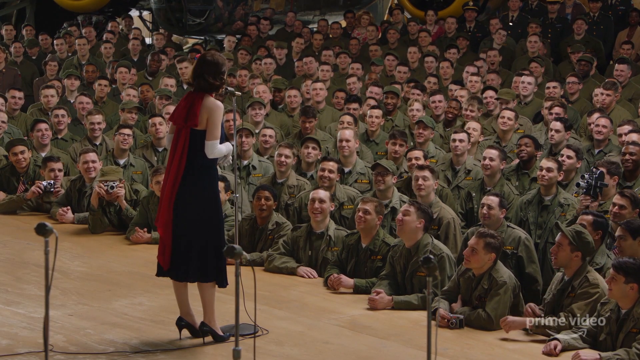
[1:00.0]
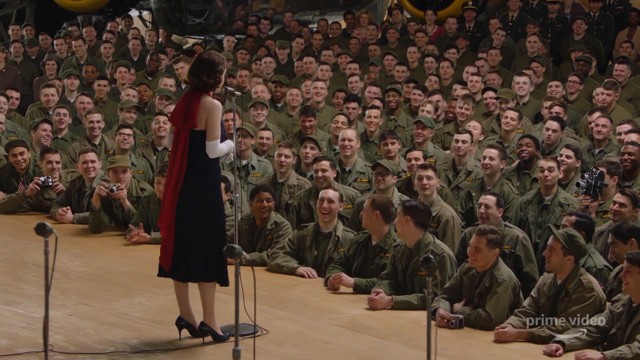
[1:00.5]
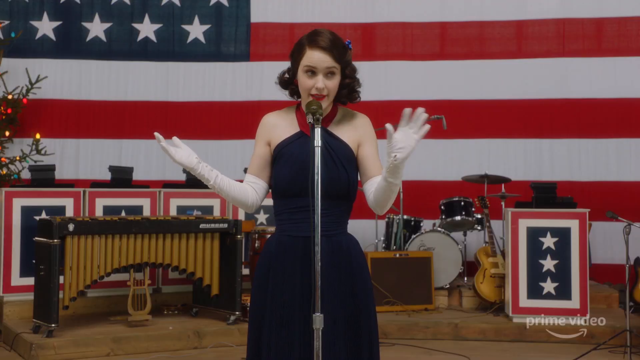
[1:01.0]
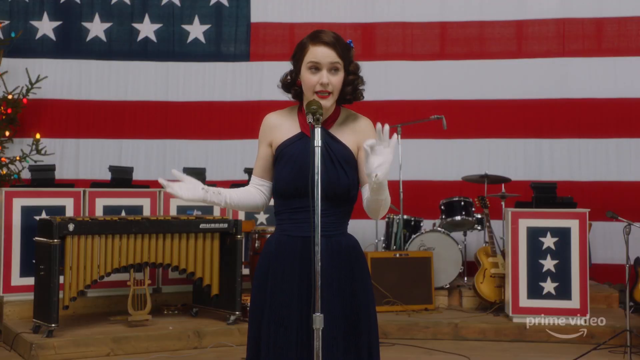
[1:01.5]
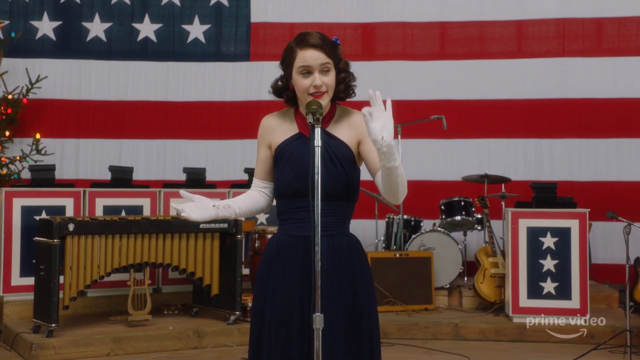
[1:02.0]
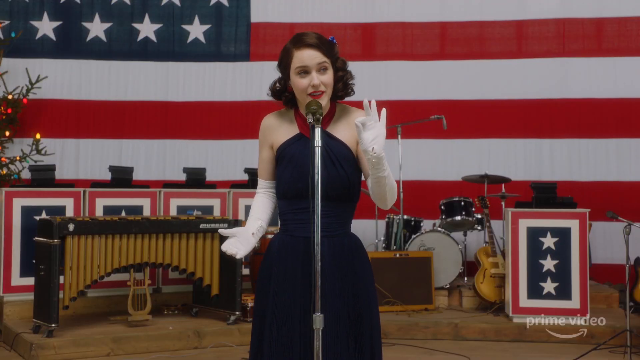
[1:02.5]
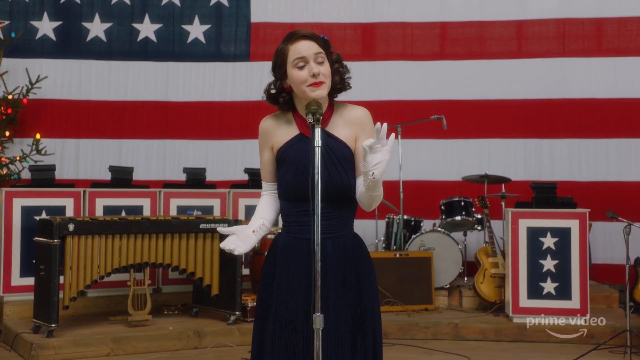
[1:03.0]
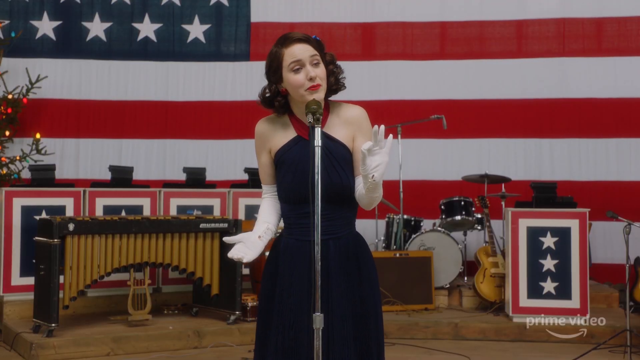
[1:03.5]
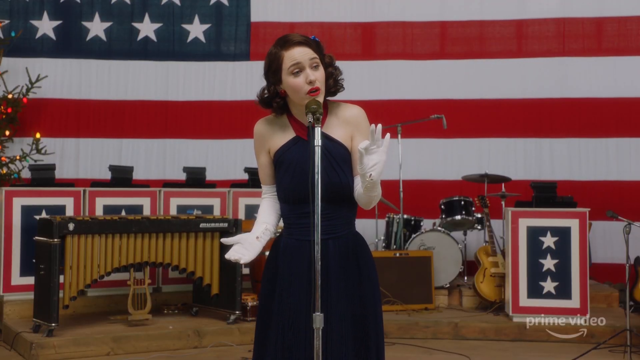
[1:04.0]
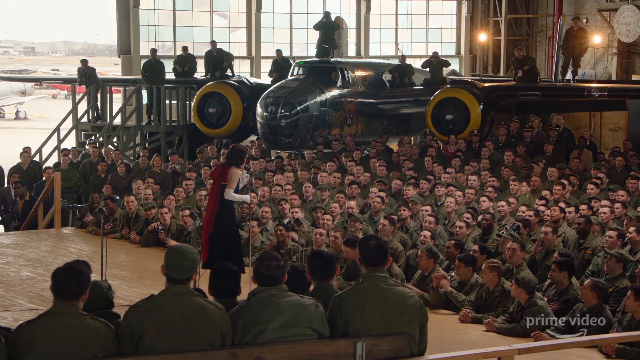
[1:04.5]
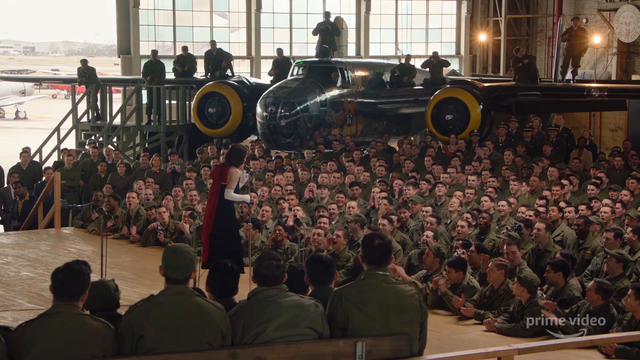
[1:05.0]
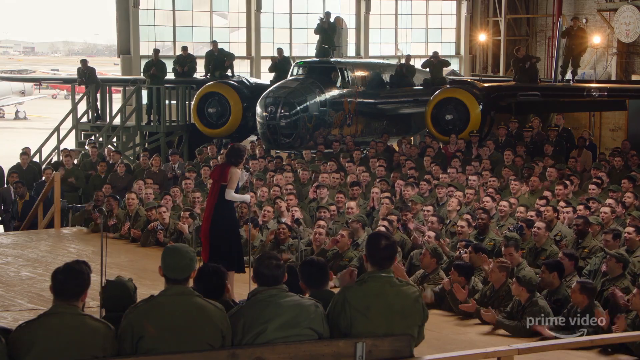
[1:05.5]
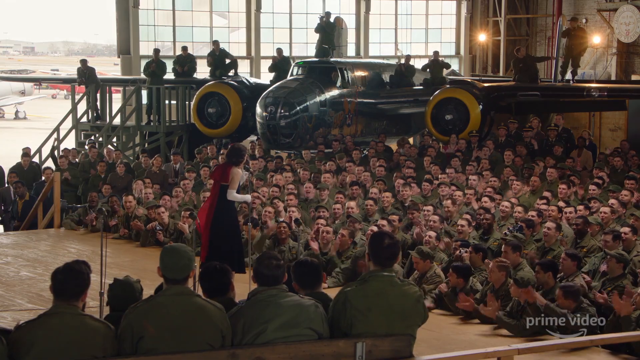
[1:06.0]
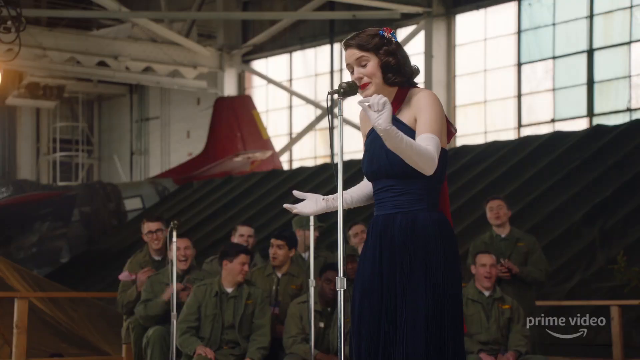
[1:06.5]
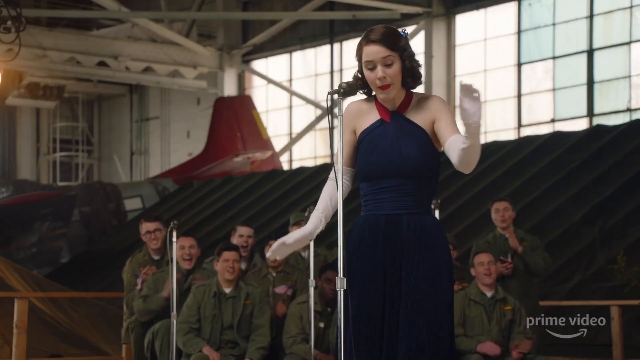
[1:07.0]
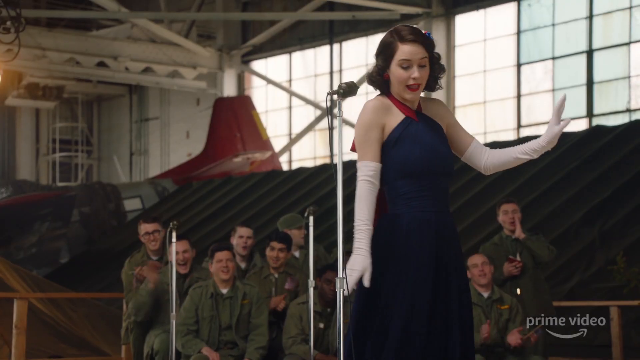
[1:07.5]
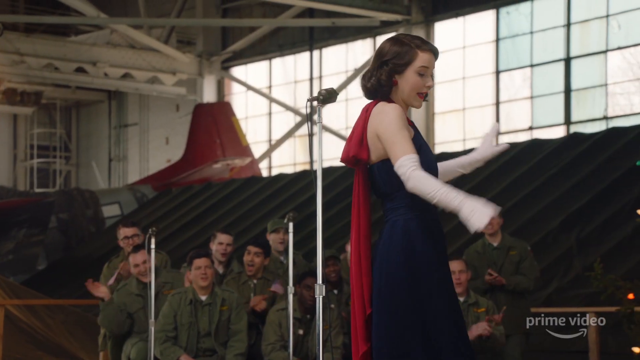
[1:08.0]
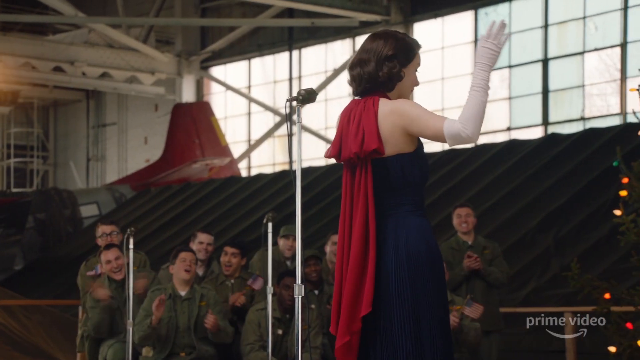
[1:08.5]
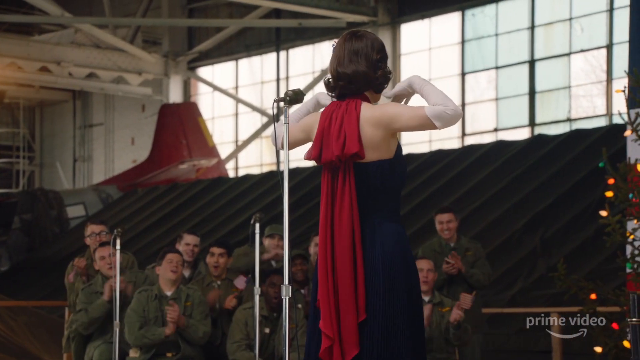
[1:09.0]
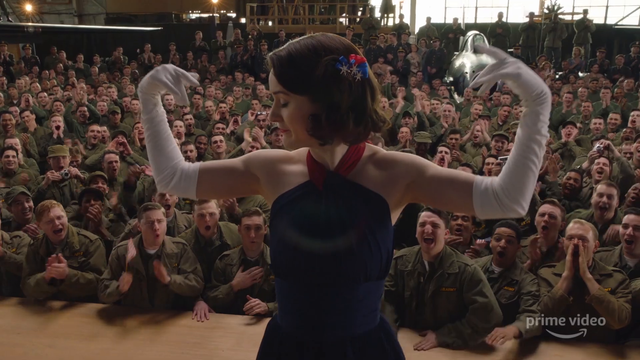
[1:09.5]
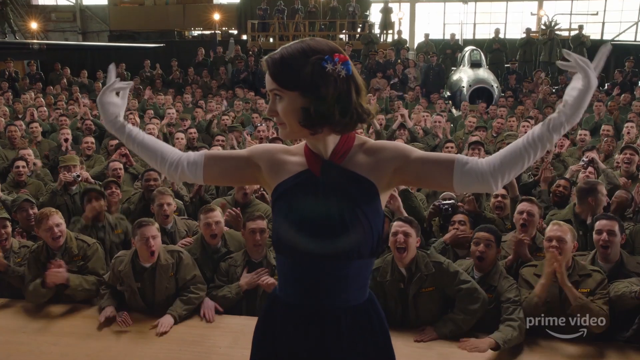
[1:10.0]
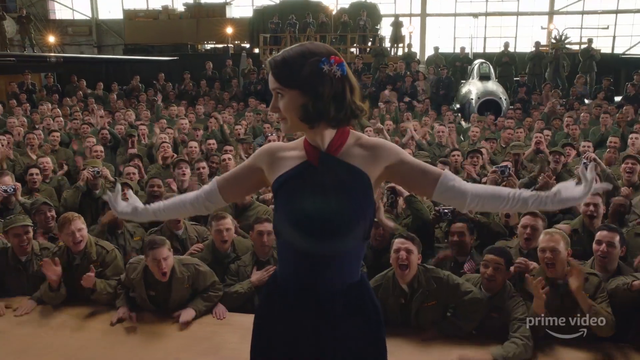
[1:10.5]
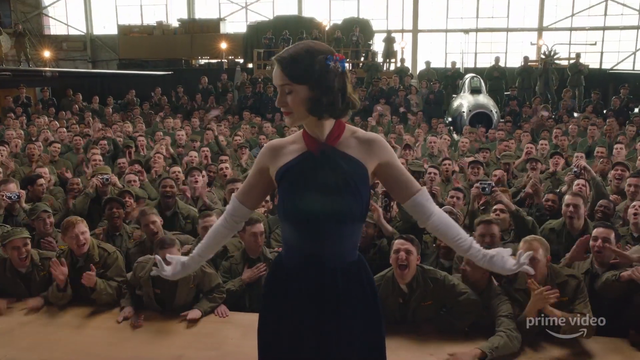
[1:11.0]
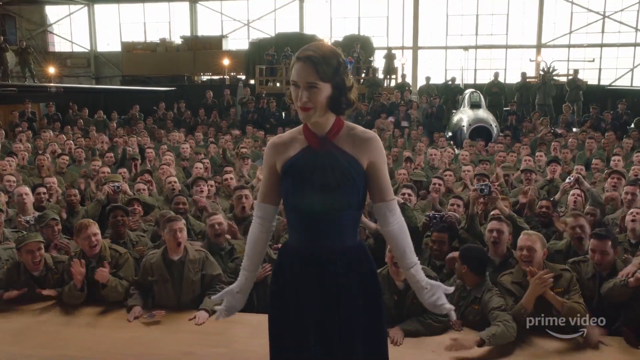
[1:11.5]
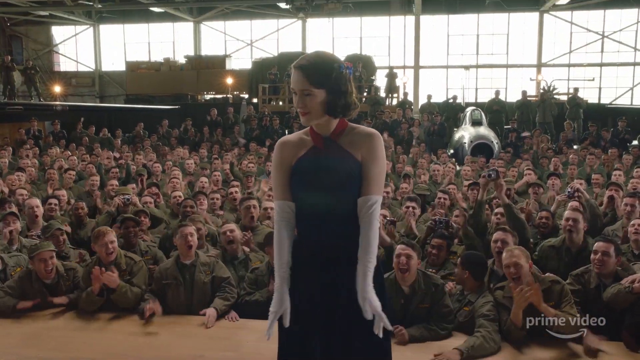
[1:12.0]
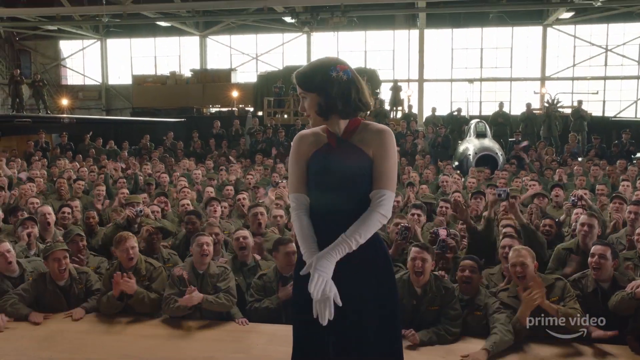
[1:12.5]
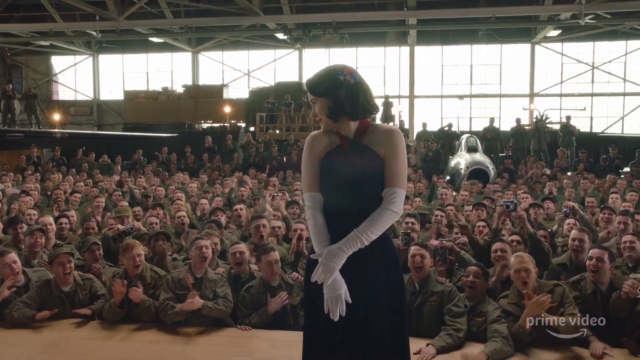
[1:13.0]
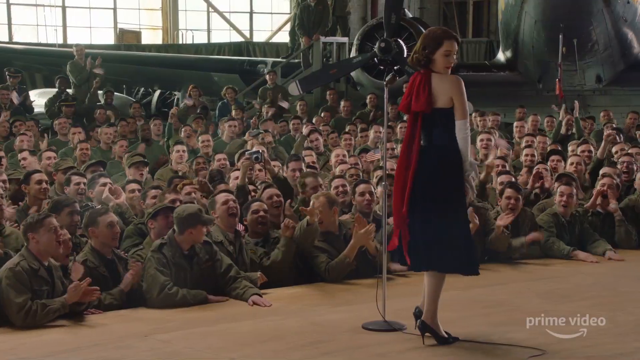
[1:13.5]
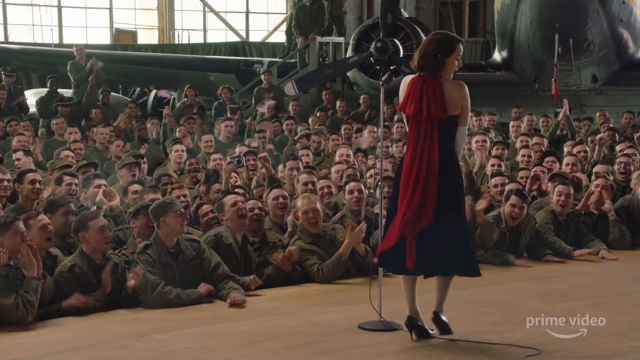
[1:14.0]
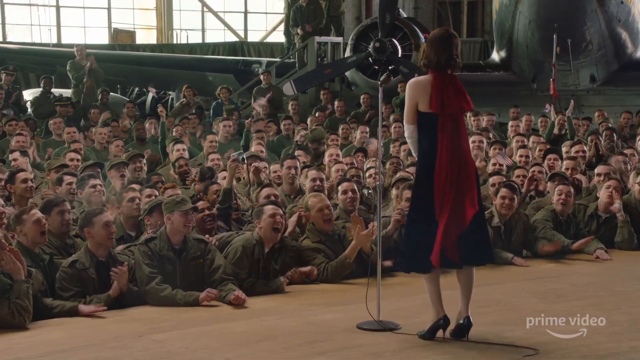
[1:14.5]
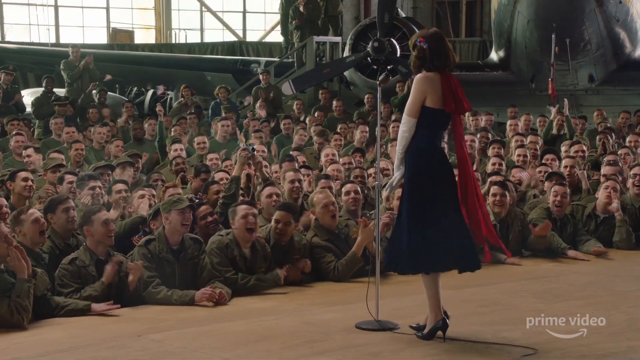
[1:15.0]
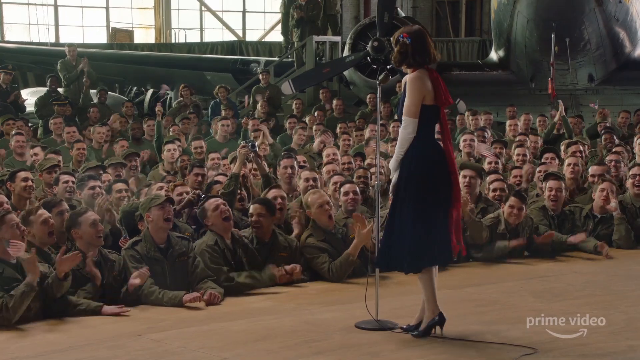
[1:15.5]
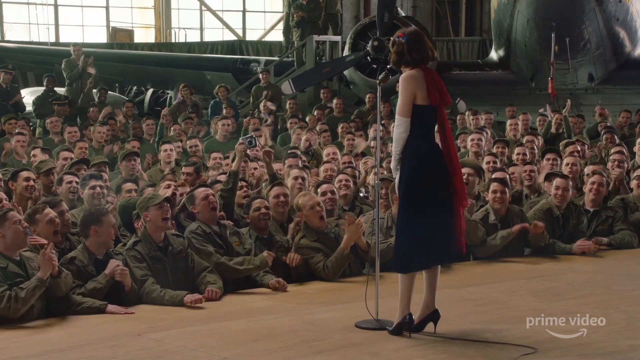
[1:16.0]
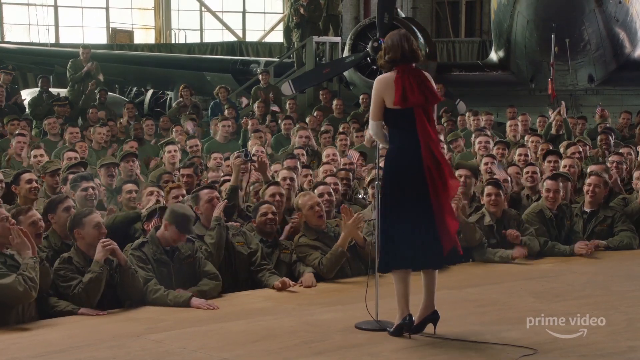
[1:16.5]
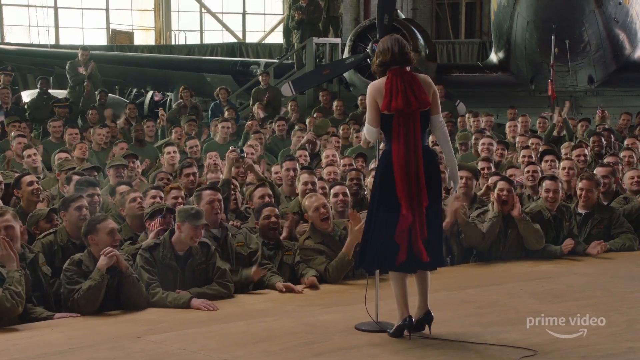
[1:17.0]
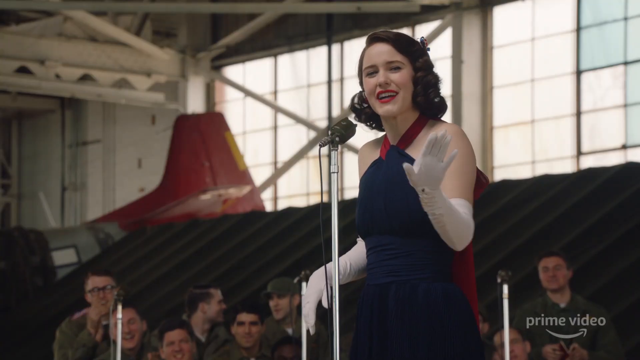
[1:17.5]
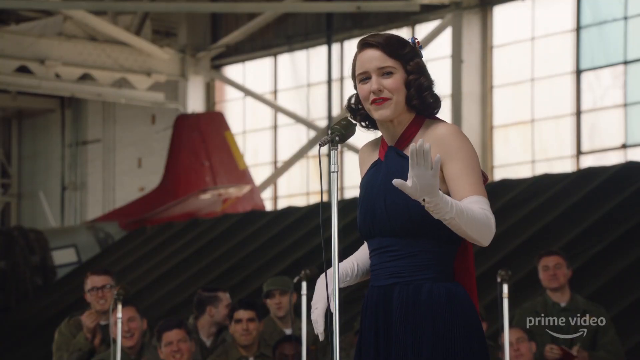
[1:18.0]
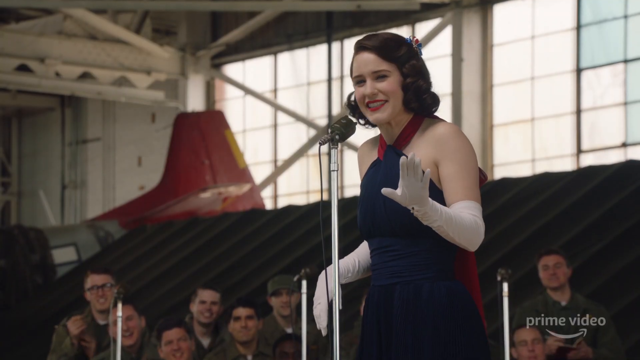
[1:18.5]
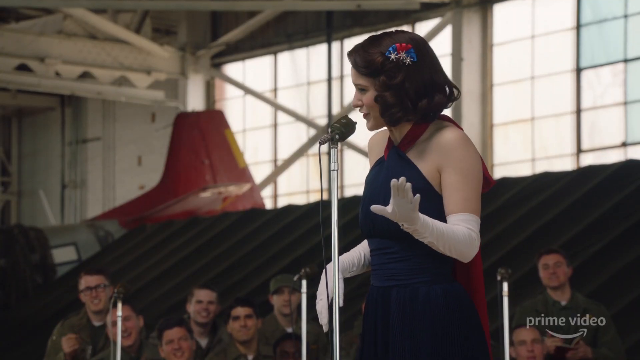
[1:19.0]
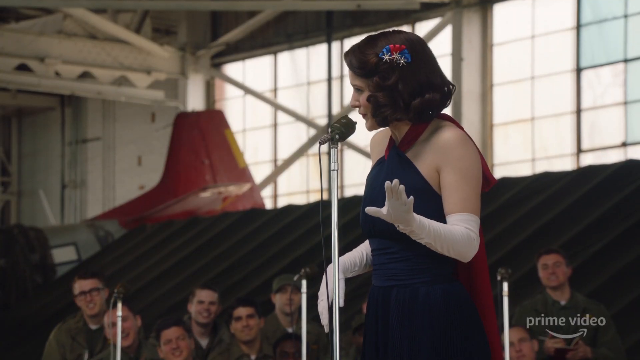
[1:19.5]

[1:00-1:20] The lady, who is white, still wears the red scarf, white gloves and blue dress as she performs in front of thousands of soldiers inside the hangar. Several planes are in the hangar: two at the back and one in front. She talks into the microphone. The men laugh and clap while laughing, with the American flag in the background. She turns around, showing her back. Men laugh and hit the surface of the stage, and she signals with her hand for them to stop as she continues performing. The propeller of a plane is visible inside the hangar. The soldiers look happy as she performs; she turns a full 360 degrees, and the men remain happy.